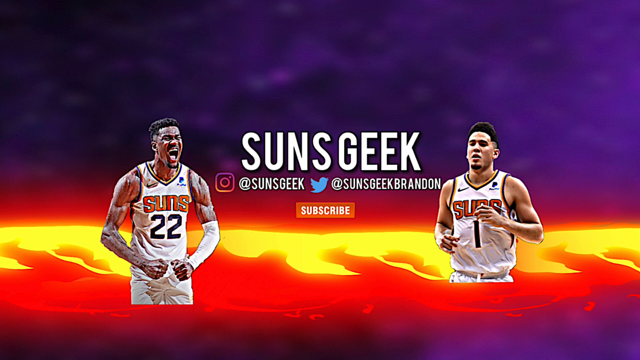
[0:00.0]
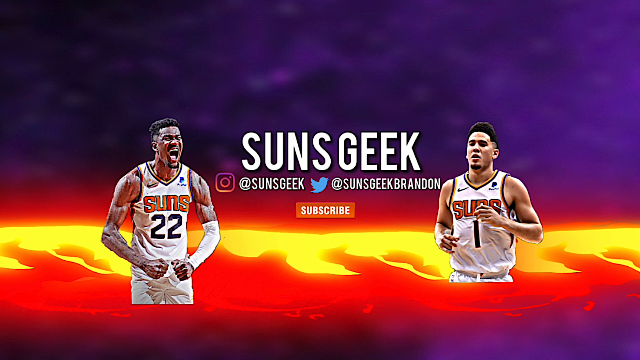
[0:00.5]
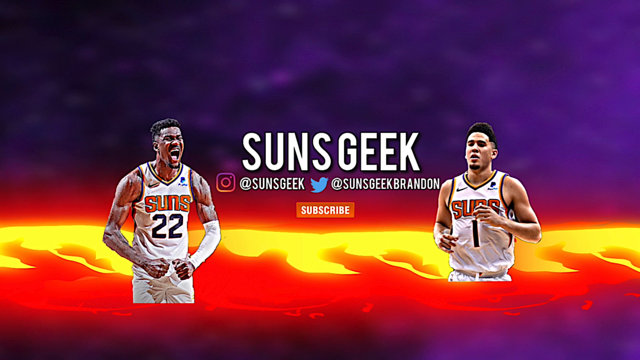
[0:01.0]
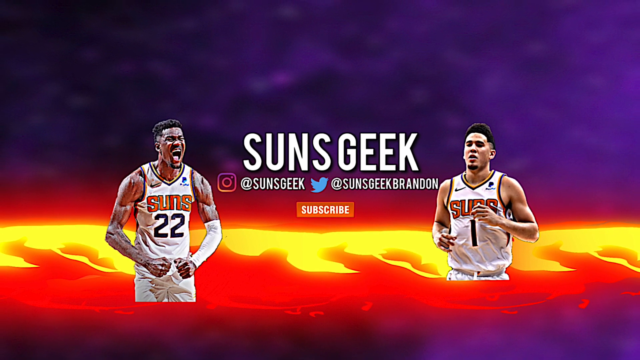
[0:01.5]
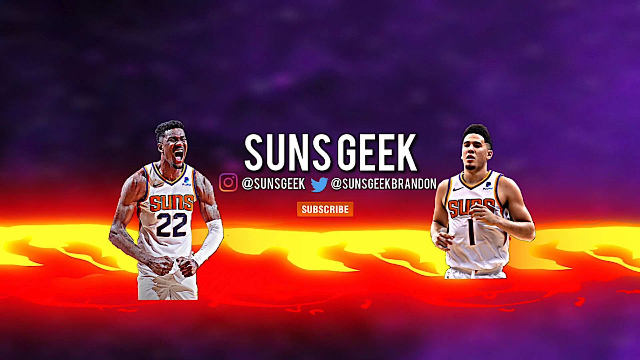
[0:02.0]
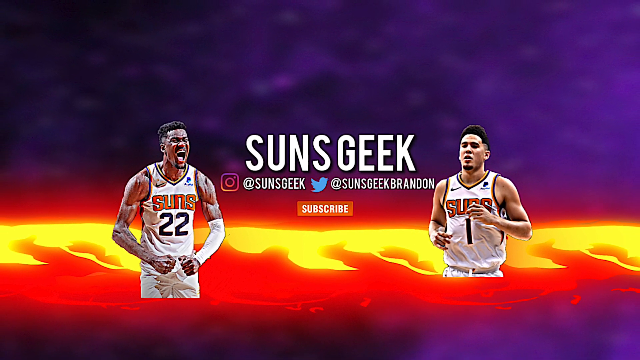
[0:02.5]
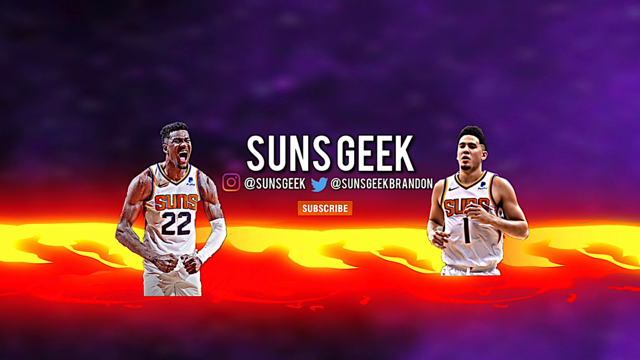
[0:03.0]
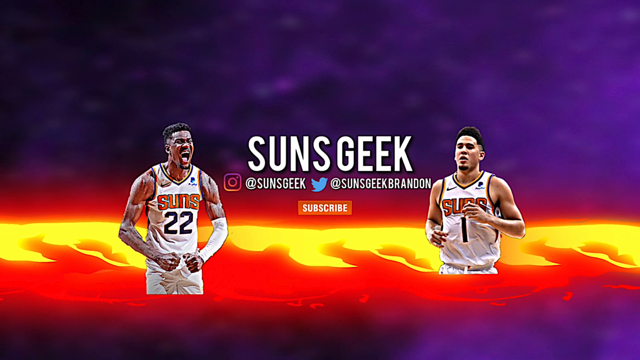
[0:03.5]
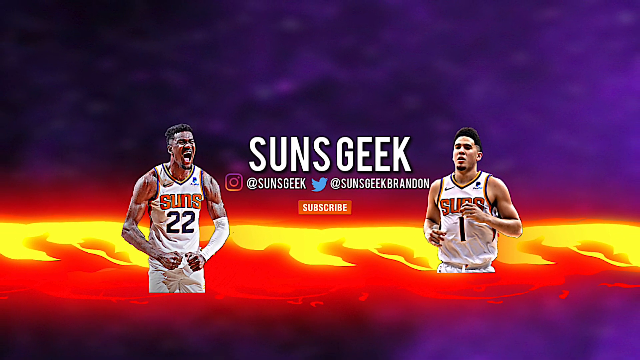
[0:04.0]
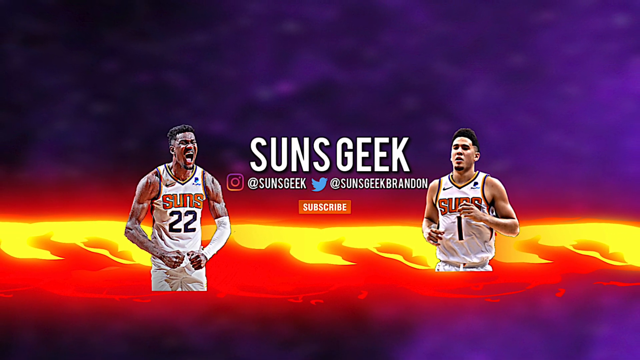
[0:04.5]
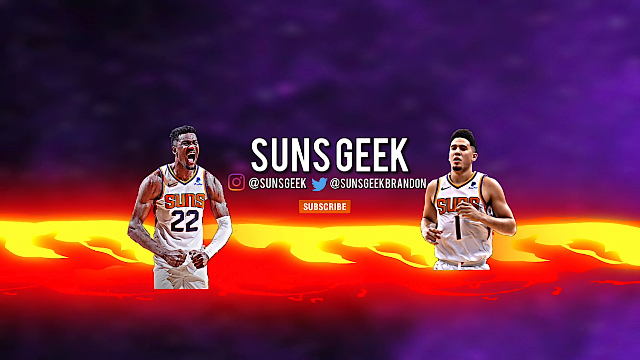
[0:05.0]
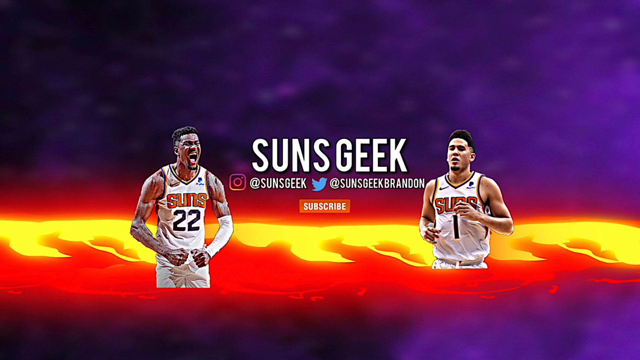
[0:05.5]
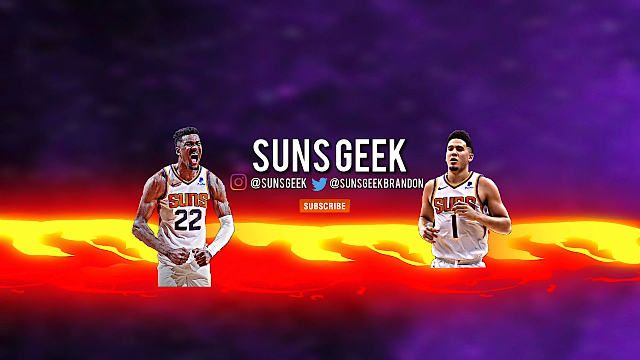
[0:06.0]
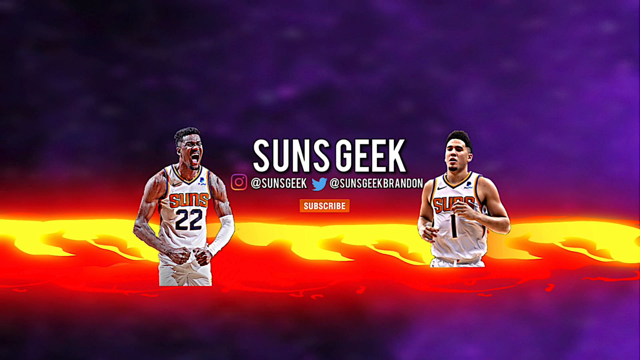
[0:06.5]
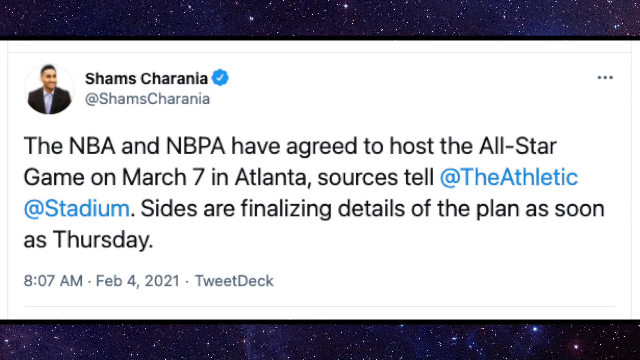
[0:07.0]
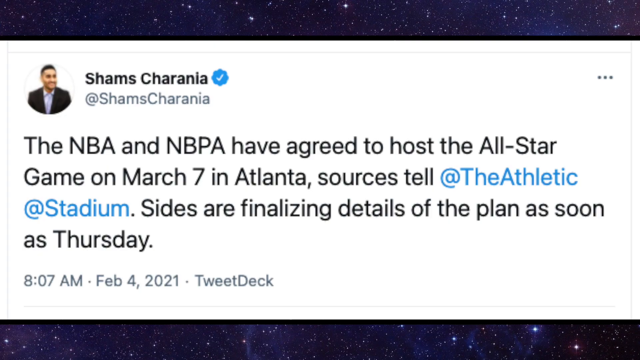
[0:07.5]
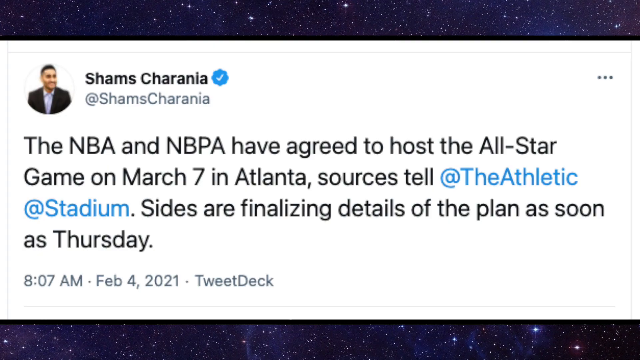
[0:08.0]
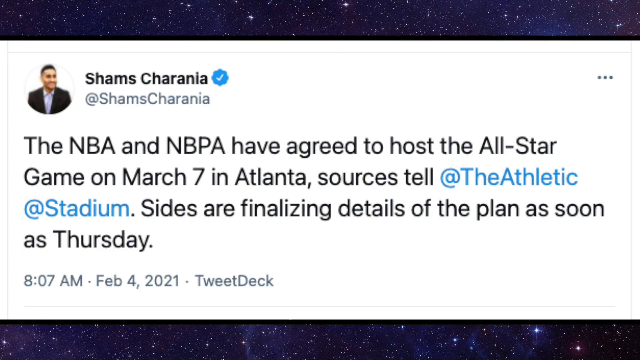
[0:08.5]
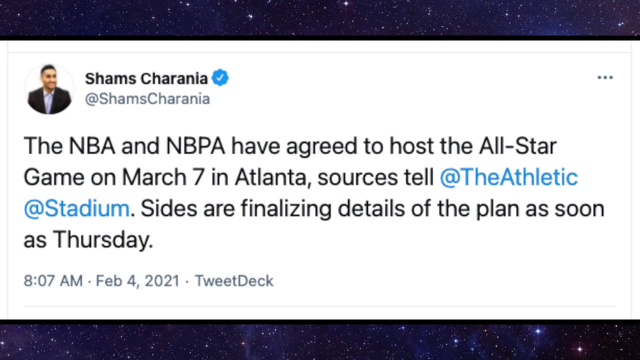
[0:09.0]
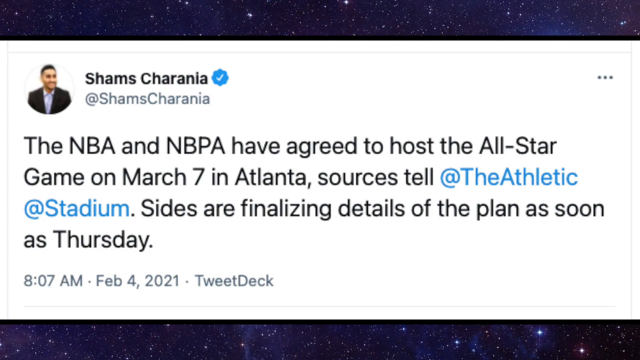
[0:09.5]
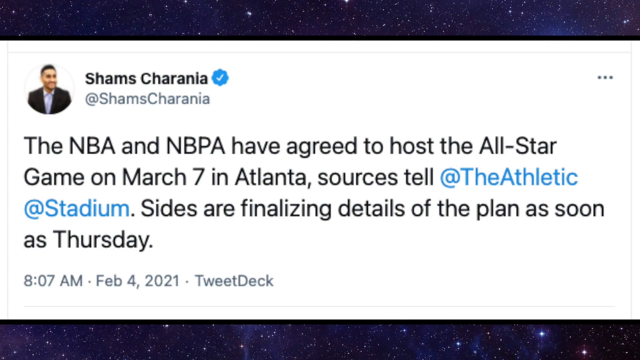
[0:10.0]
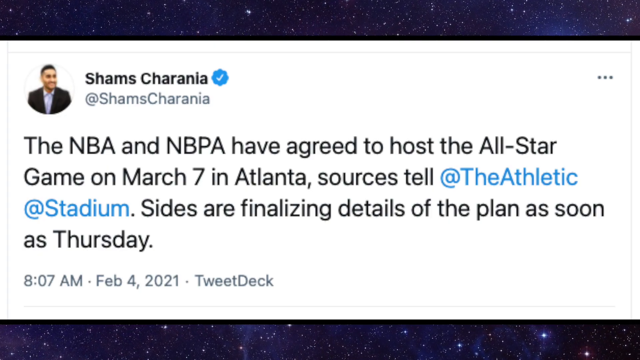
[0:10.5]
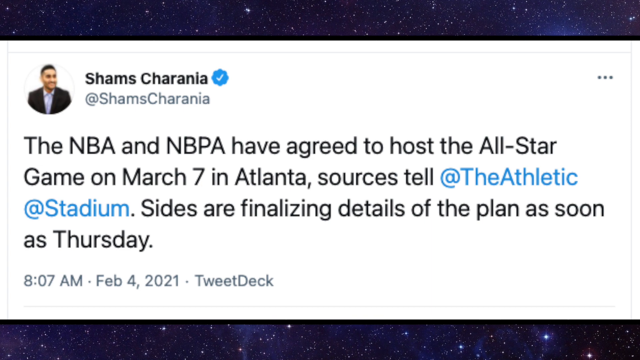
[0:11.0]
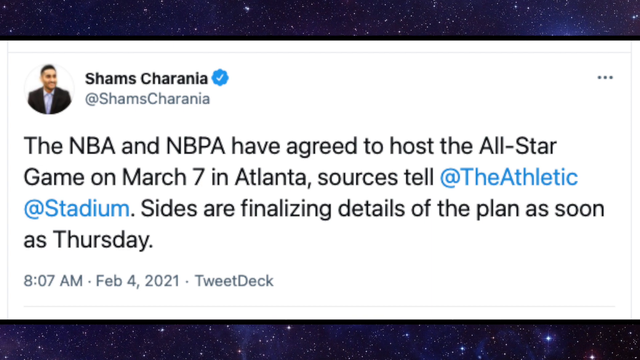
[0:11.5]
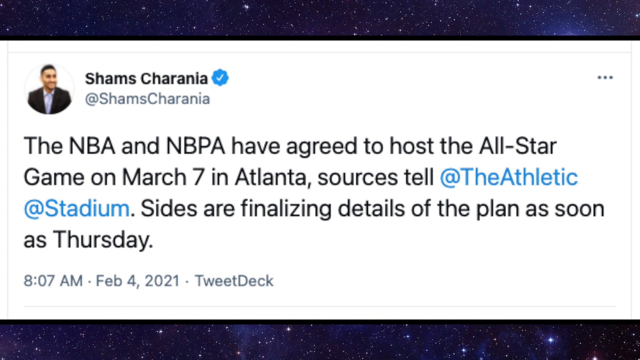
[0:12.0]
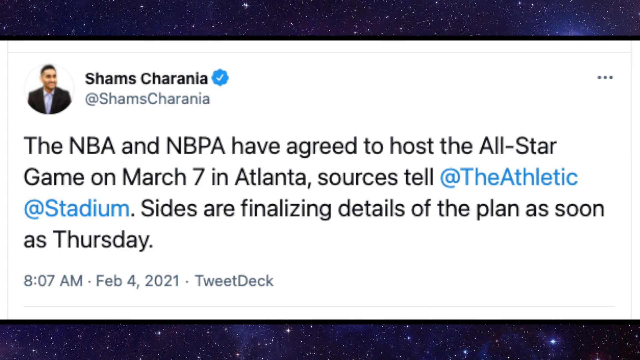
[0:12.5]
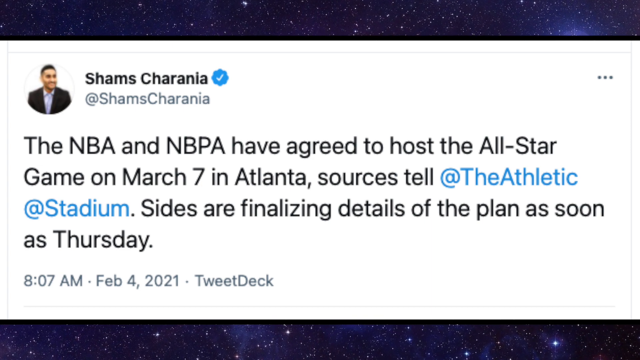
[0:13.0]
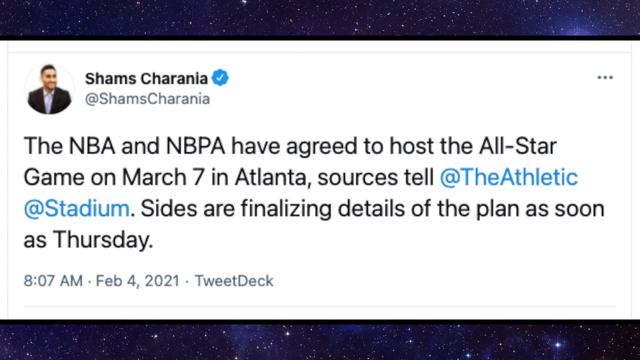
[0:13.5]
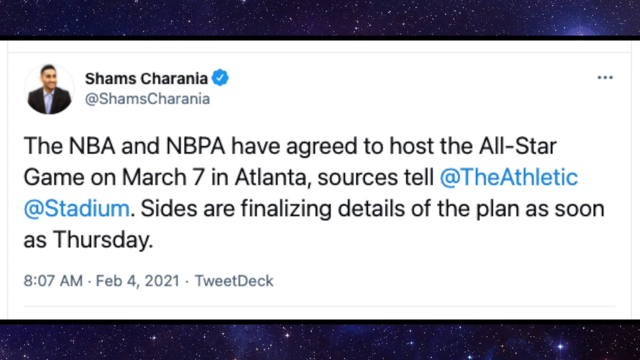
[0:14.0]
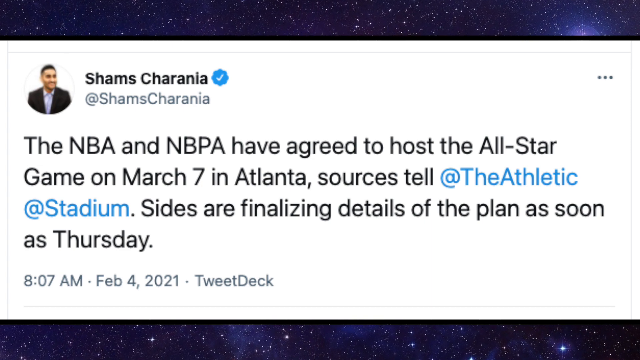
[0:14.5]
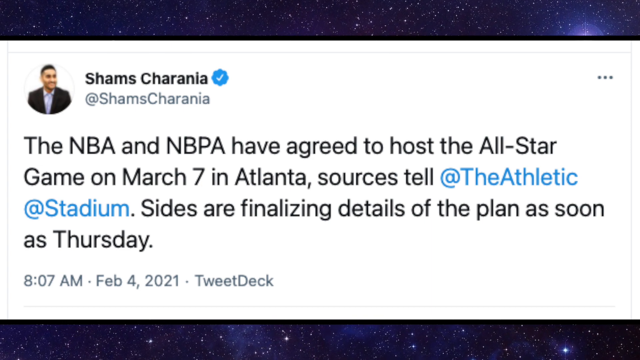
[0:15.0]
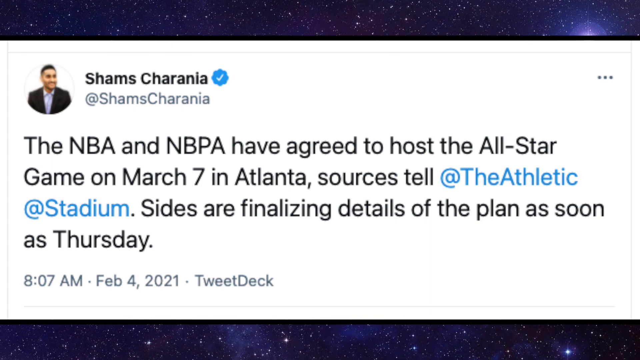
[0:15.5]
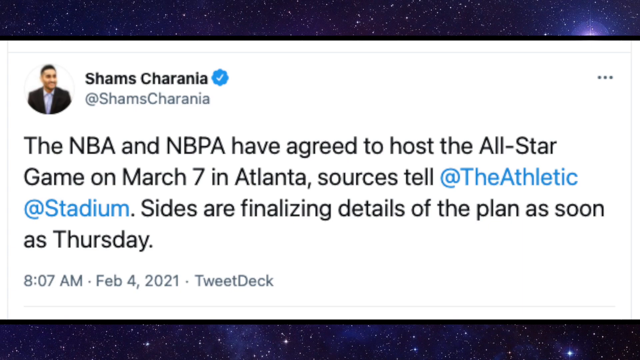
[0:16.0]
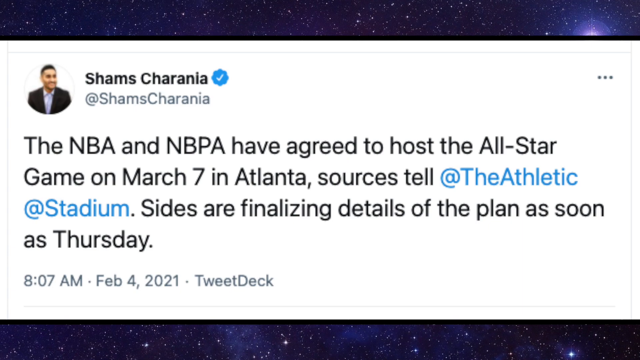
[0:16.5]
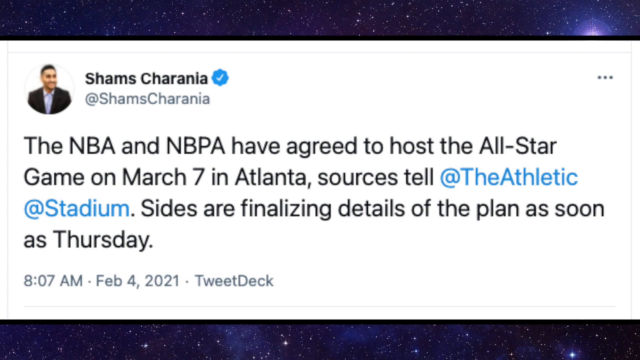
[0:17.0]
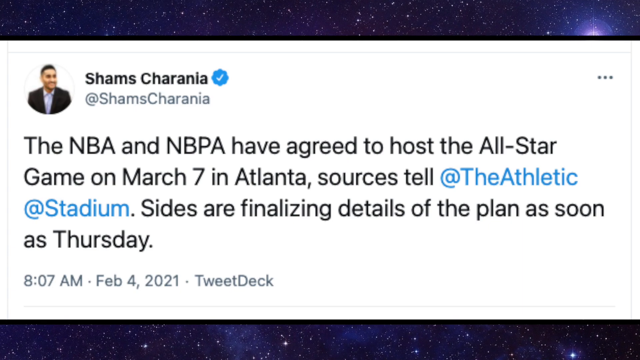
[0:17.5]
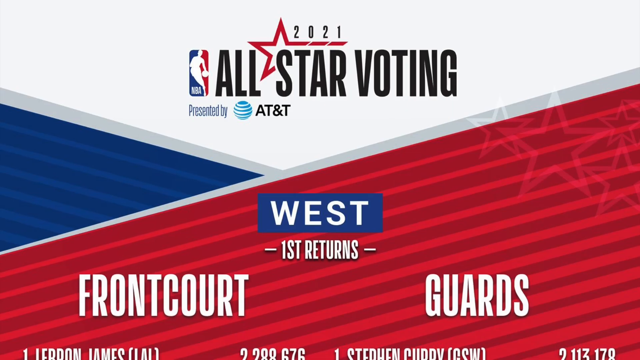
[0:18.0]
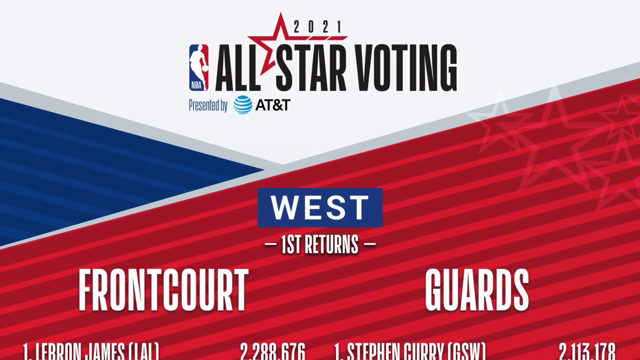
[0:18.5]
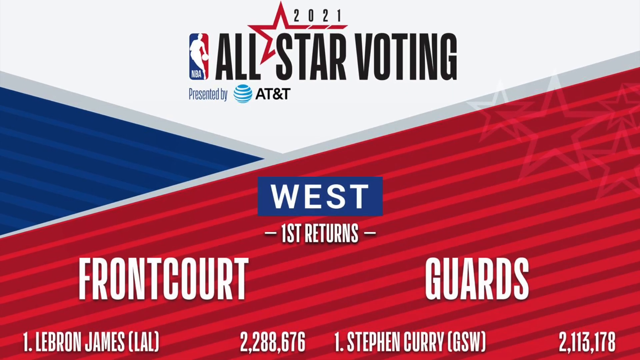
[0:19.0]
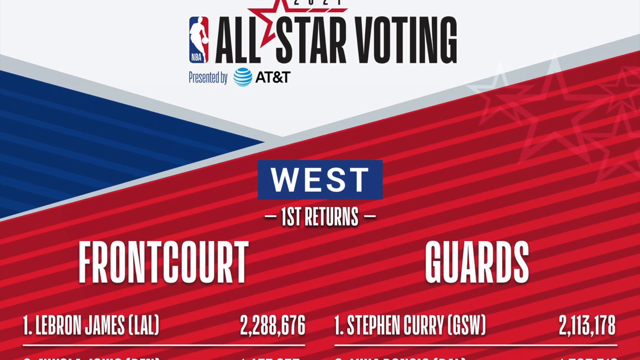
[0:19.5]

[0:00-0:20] The video opens with an image from a page called Suns Geek, a page about the Phoenix Suns, an NBA team. The image shows two players, both in the white Suns uniform. The player on the left wears number 22 and the player on the right wears number 1. The player on the left wears an arm-stretcher and makes a victorious pose, while the player on the right seems to be running in a calm, attentive manner. The frame then transitions to a tweet stating that the NBA and NBPA have agreed to host the All-Star Game on March 7th in Atlanta, citing sources, and that the sides are finalizing the details of the plan. The tweet was posted by Shams Sharanya at 8:07 a.m. on February 4th, 2021. Next comes an image of the NBA All-Star voting, which begins moving down. The frontcourt is on the left and the guards are on the right; only the names LeBron James on the left and Steph Curry on the right are visible.